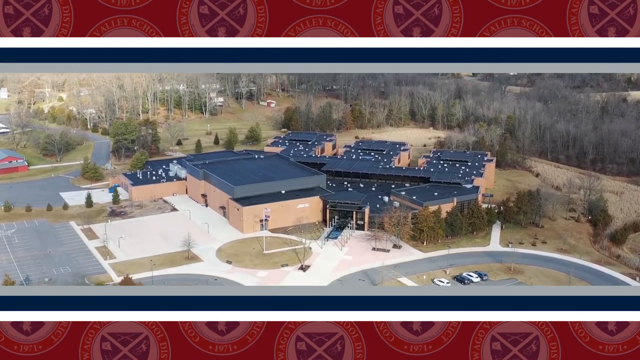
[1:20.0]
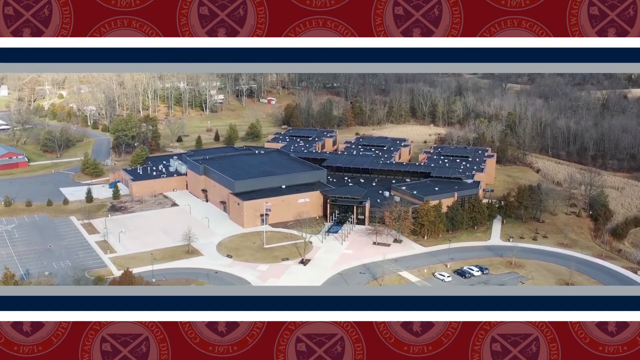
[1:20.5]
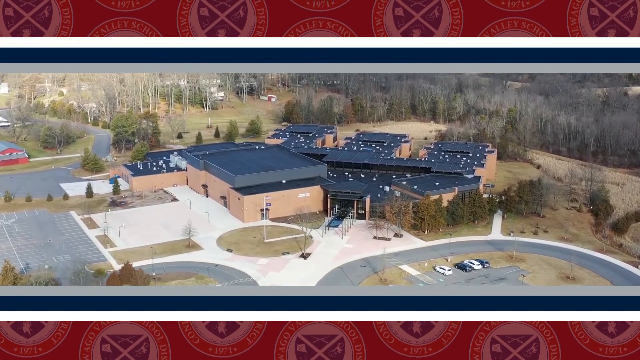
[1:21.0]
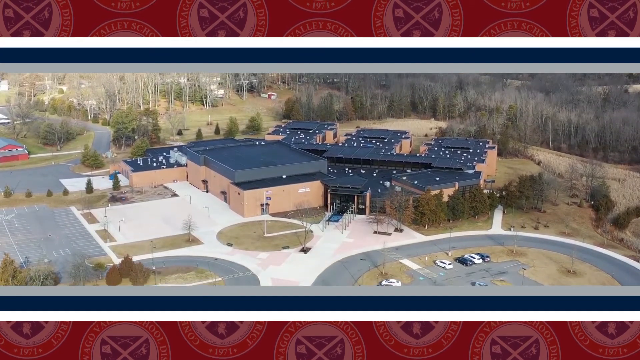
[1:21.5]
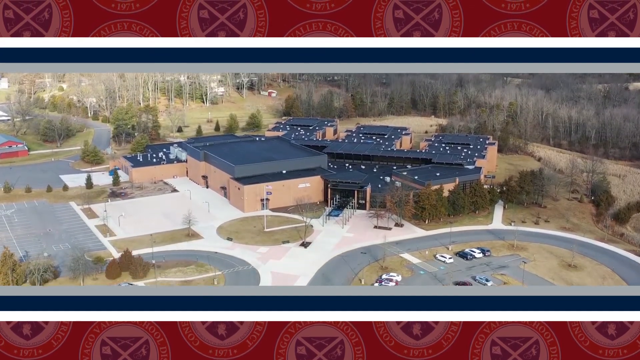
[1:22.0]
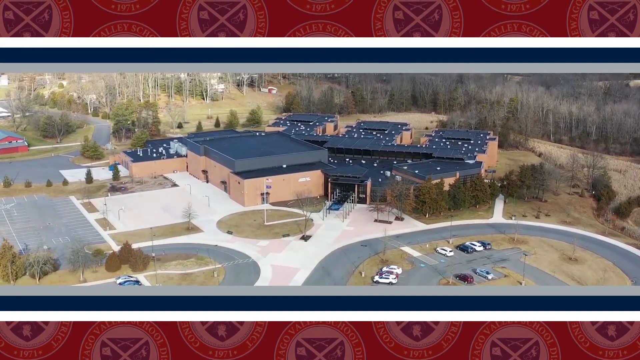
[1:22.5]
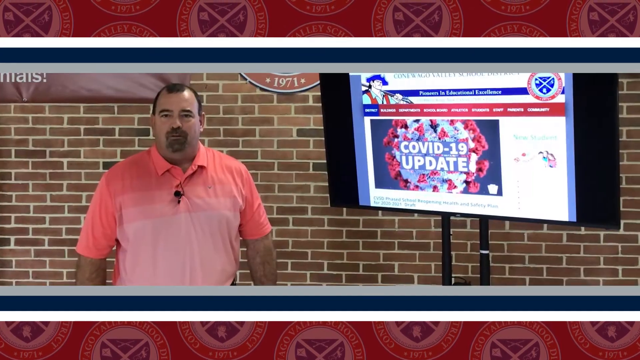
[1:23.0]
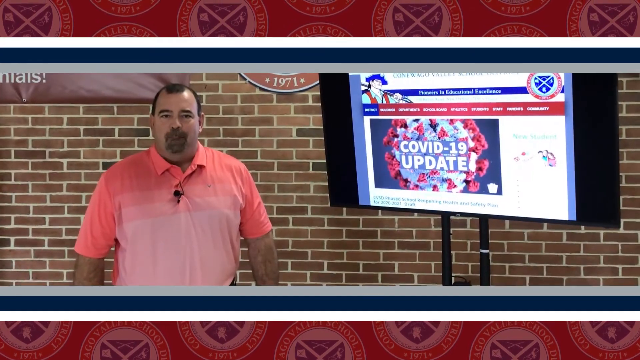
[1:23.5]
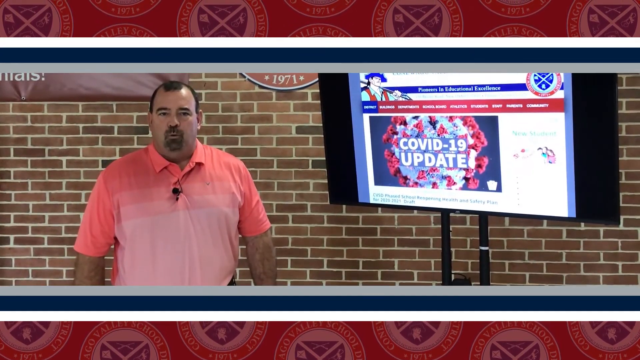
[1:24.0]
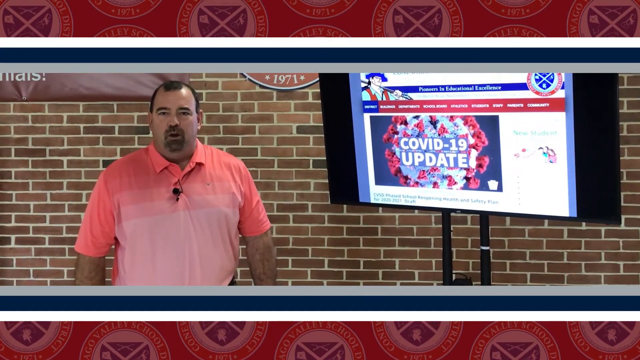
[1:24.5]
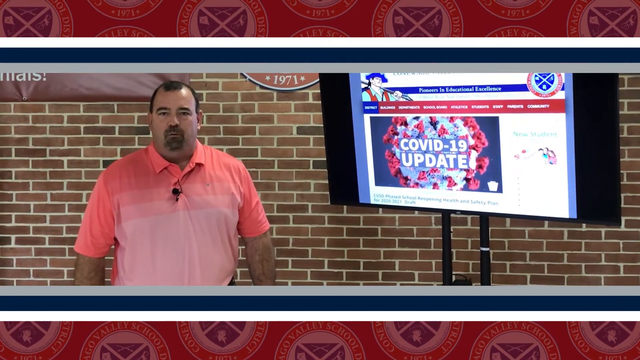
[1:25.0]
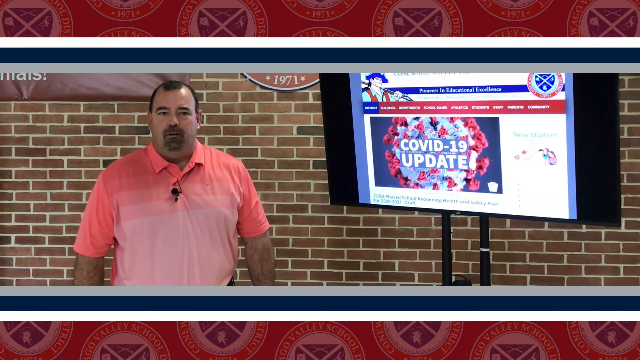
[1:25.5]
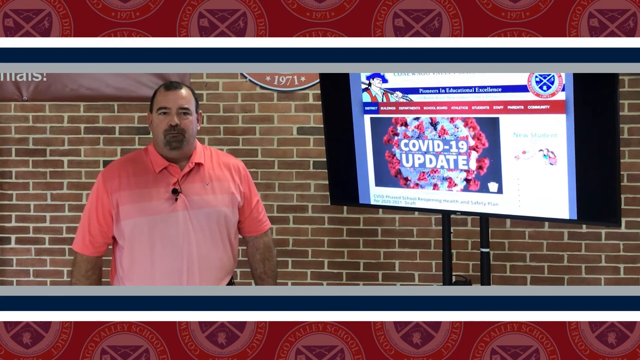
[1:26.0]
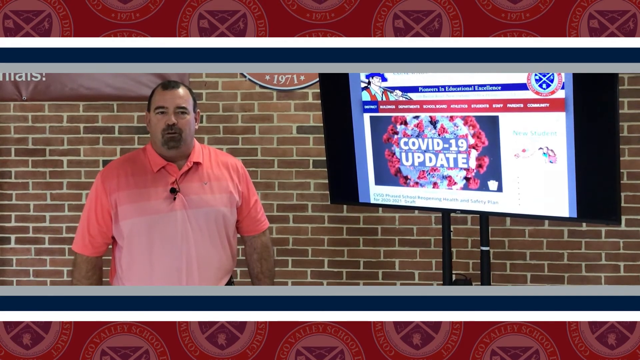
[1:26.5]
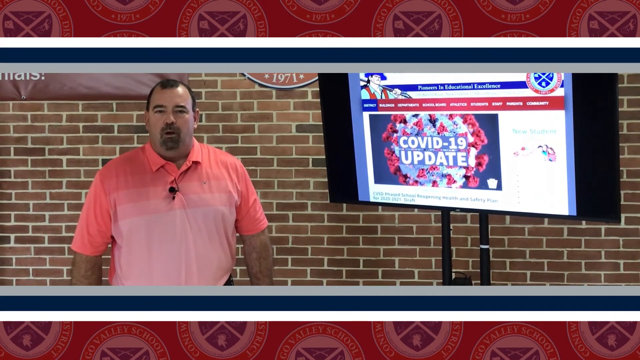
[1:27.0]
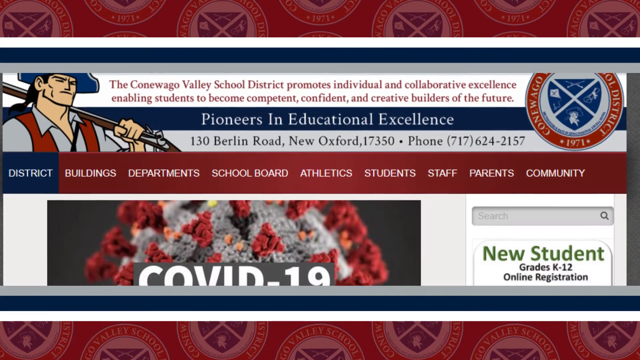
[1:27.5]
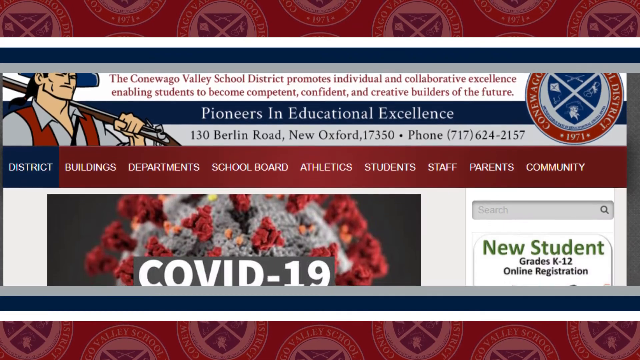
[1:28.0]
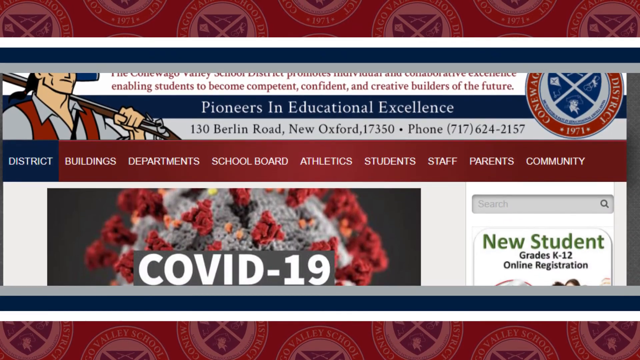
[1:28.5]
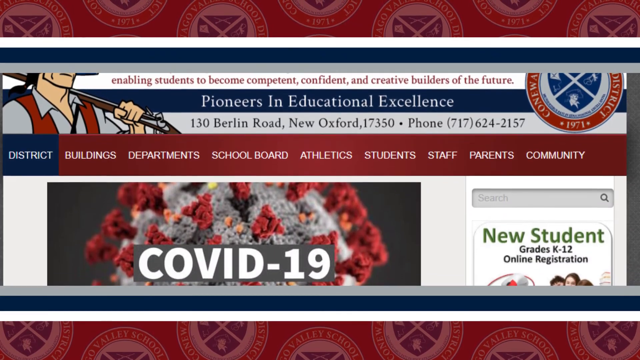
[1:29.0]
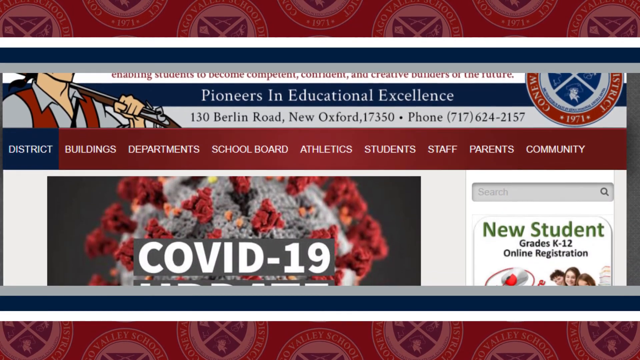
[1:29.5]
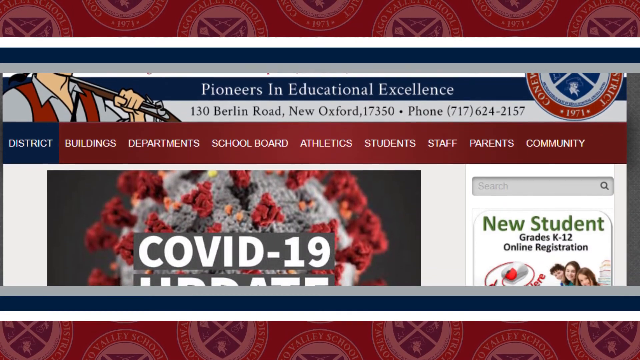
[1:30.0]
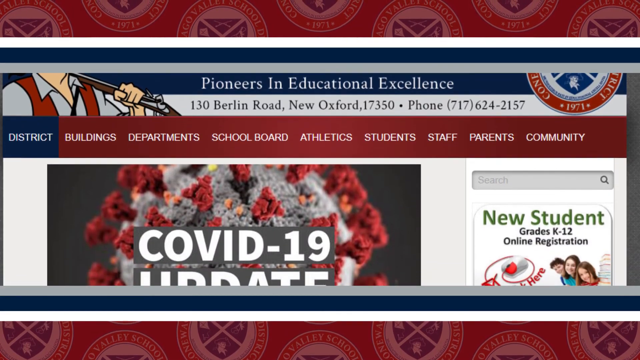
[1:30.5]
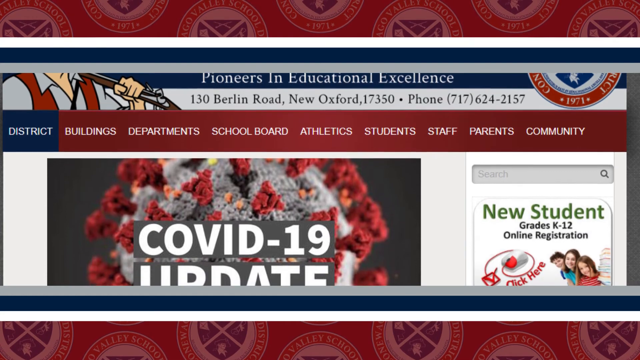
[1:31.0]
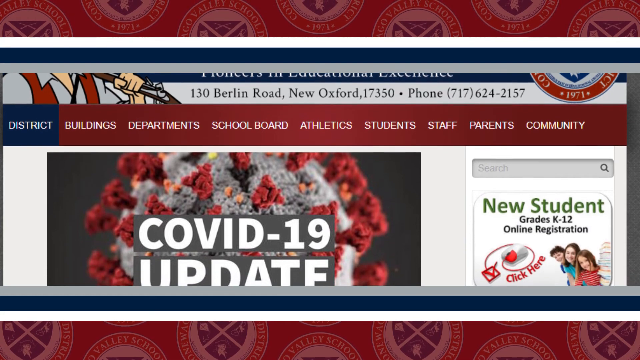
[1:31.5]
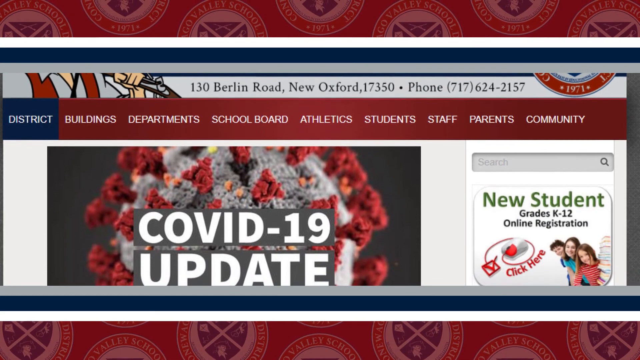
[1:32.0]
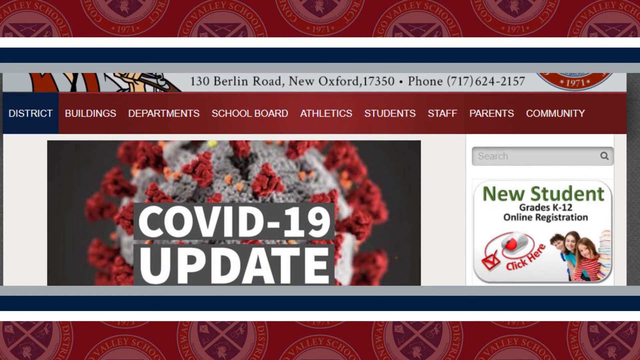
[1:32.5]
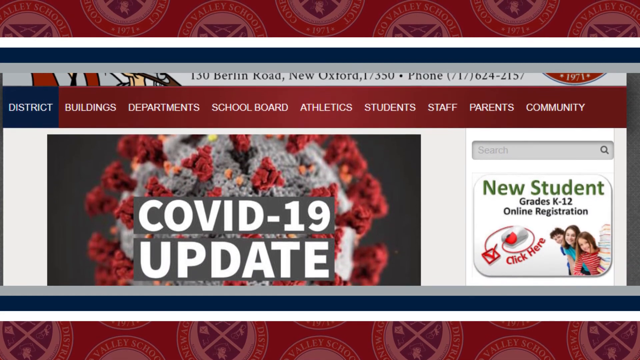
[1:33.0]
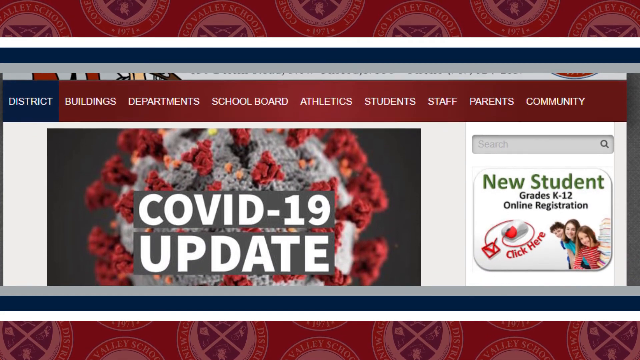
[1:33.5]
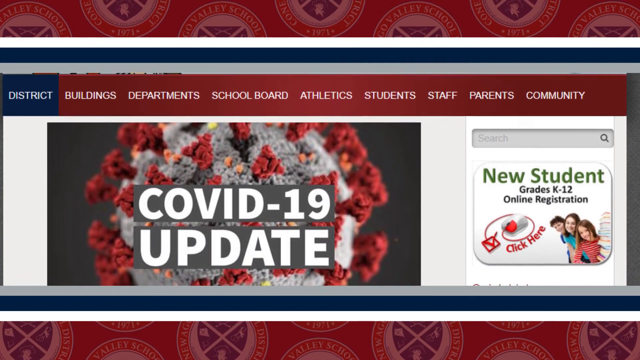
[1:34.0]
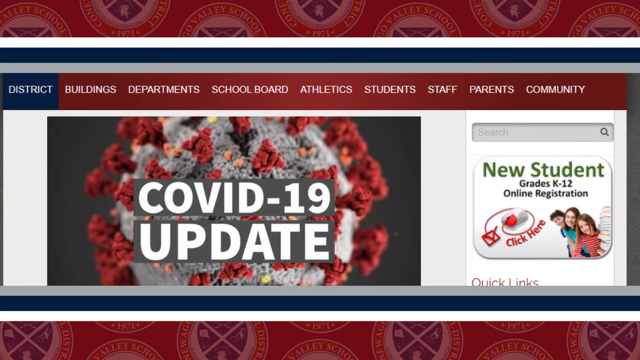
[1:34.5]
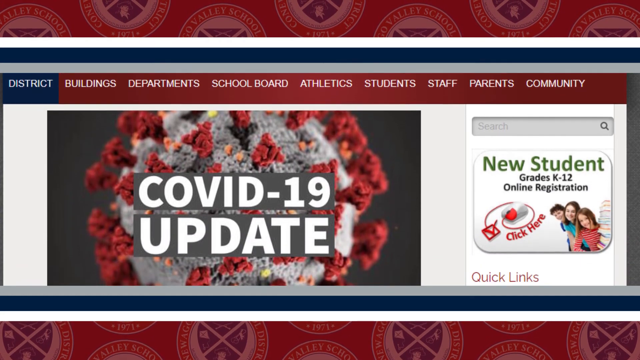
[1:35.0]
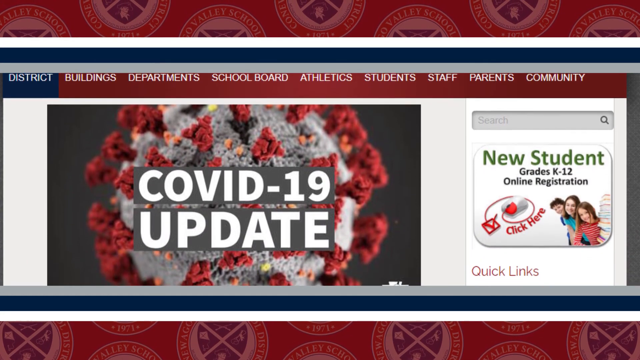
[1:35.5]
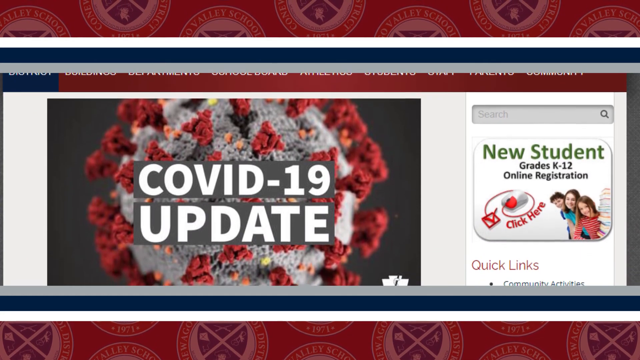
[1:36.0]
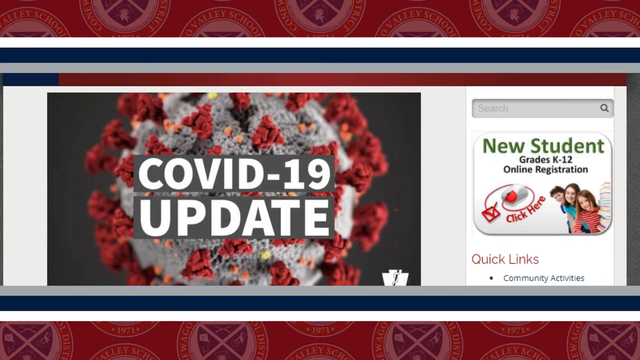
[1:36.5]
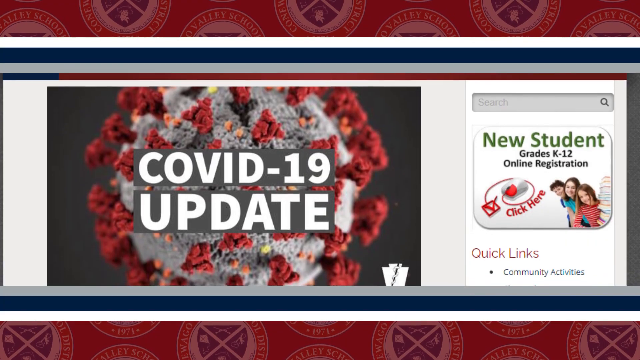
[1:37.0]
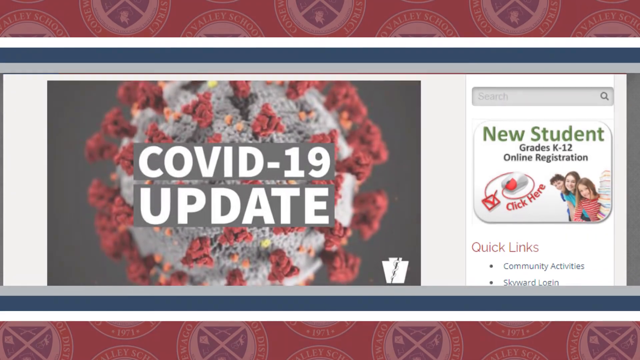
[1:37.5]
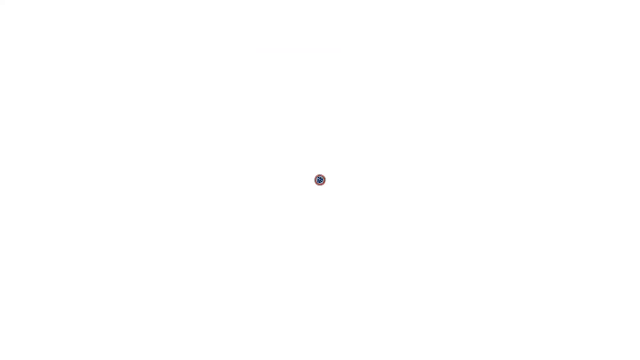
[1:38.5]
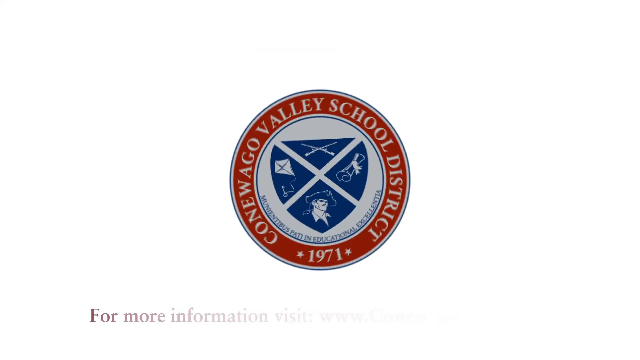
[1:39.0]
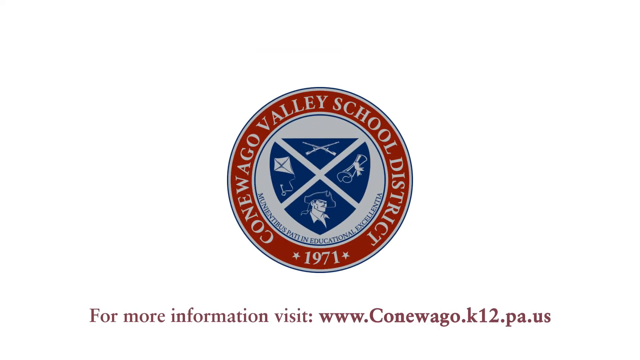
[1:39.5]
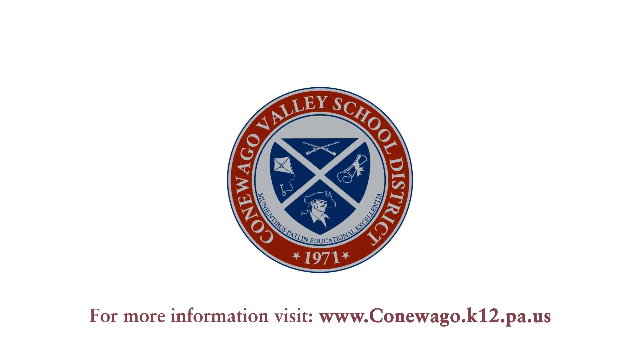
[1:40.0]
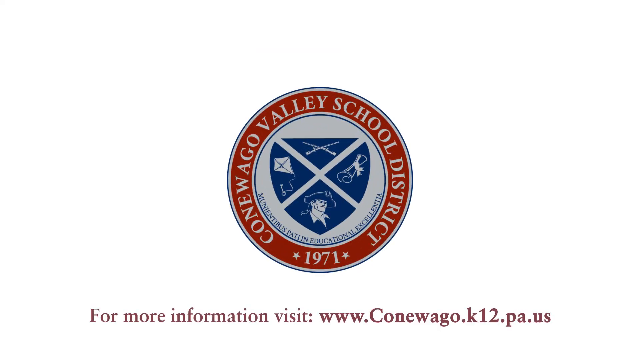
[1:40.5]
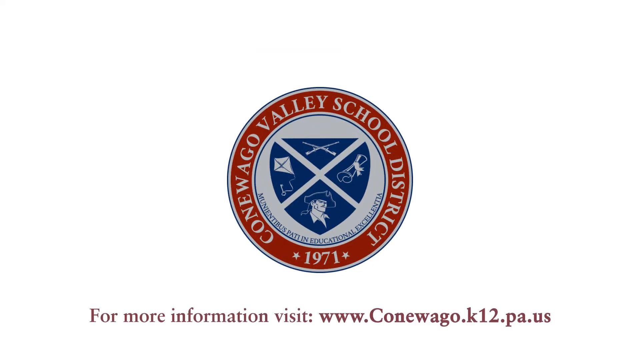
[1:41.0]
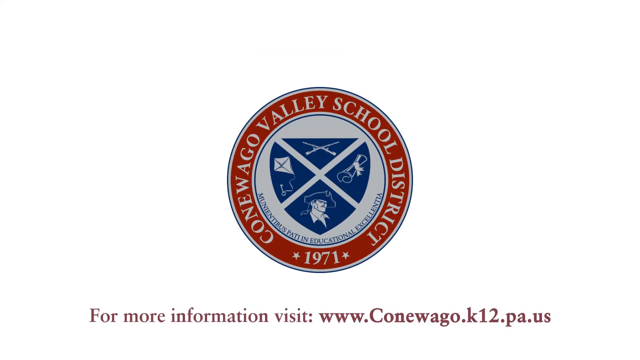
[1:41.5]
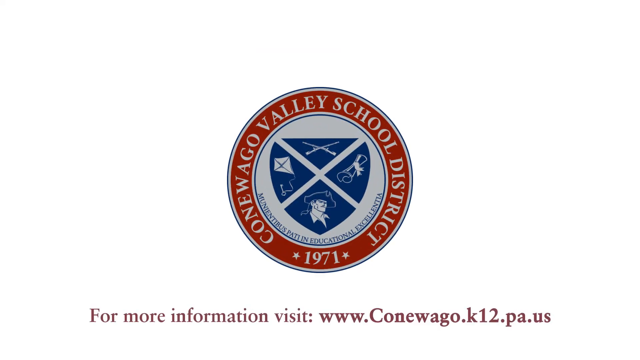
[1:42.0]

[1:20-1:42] Another outdoor view shows a complex whose buildings have tan brick walls and dark blue roofs. The camera zooms down from above, and in front of it are circular roads with parking lots on the left and right. The video goes indoors again to a man in a pink or peach colored polo shirt speaking to the camera. Next to him is a television on a black stand, showing what appears to be a news article with a graphic with the text "COVID-19 update". After the man speaks for a moment, the video shows a zoomed-in view of the article directly on the screen. It appears to show a web page with artwork of a man holding a rifle at the top left and the logo at the top right. It says "Pioneers in educational excellence" and shows an address and a phone number below that. Below all that is a navigation bar, and as the page slowly scrolls down, it shows the artwork, the graphic with the text "COVID-19 update". The screen fades to white and then shows another view of the school logo with a website link.